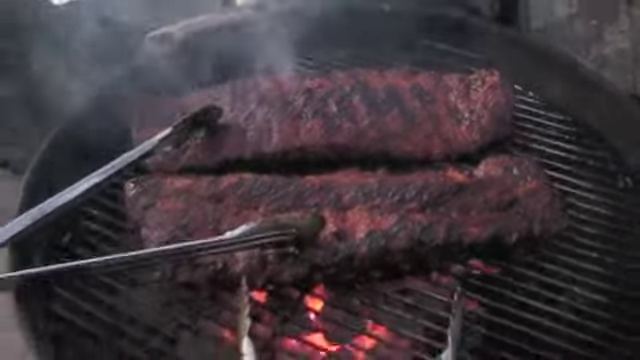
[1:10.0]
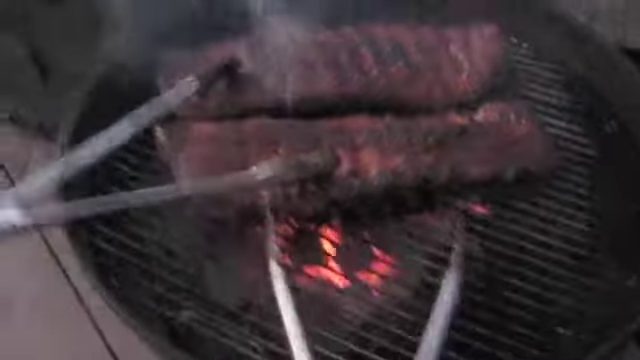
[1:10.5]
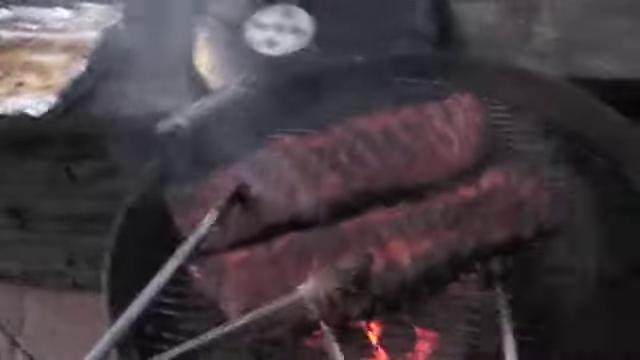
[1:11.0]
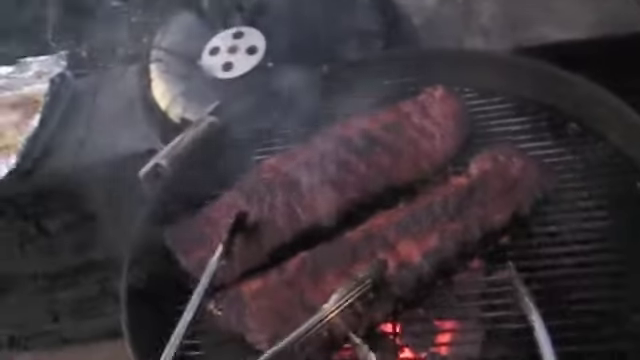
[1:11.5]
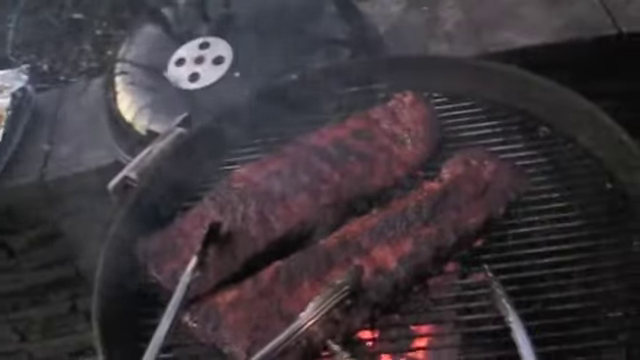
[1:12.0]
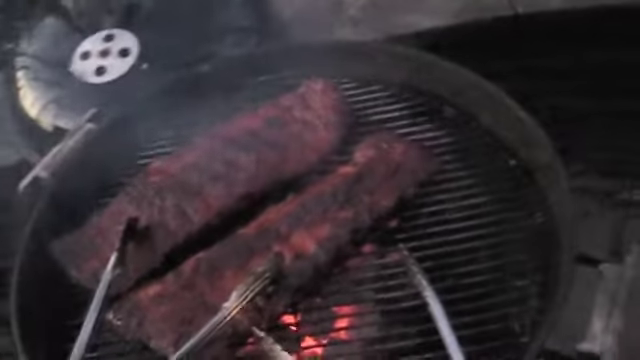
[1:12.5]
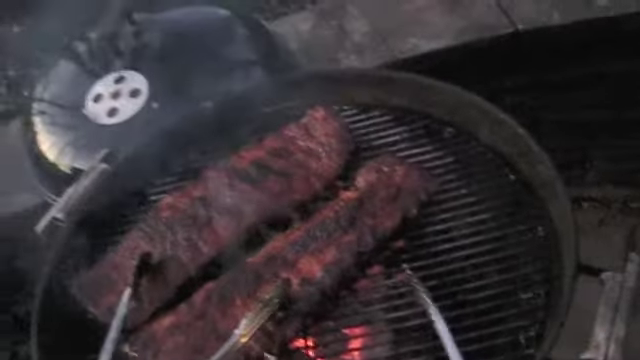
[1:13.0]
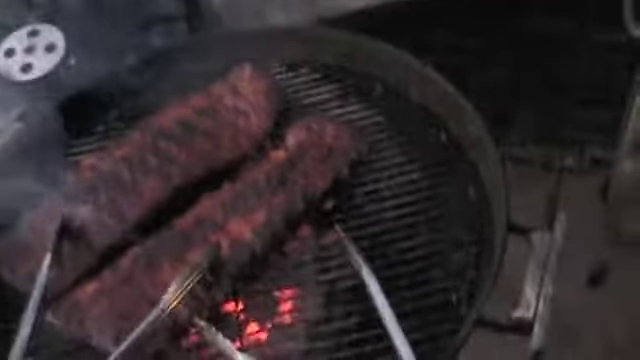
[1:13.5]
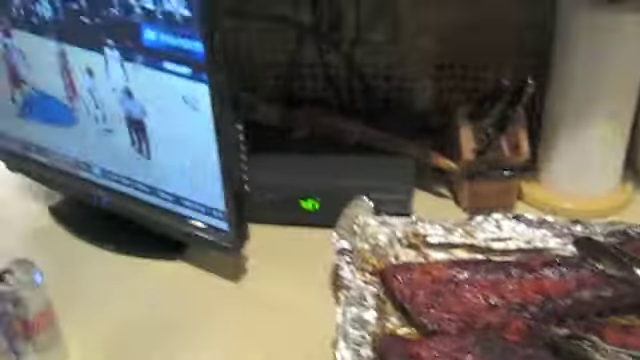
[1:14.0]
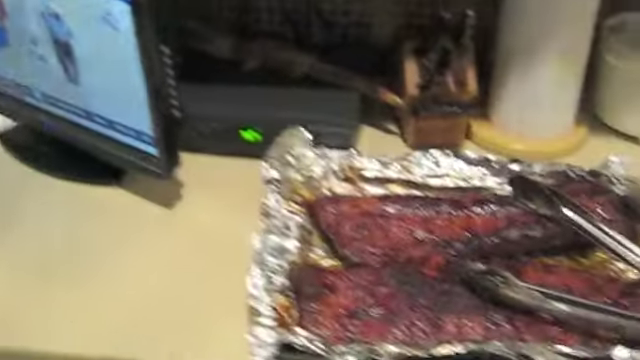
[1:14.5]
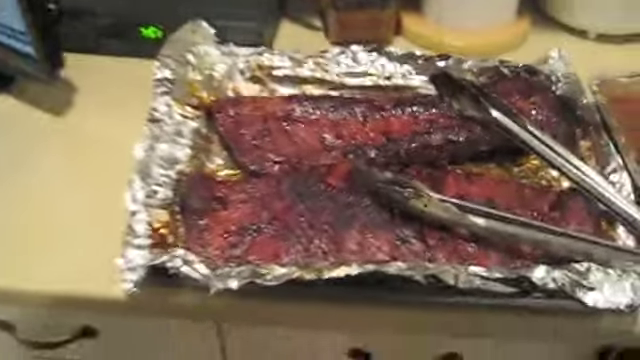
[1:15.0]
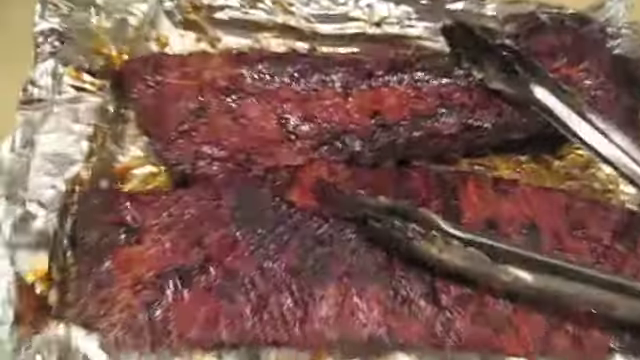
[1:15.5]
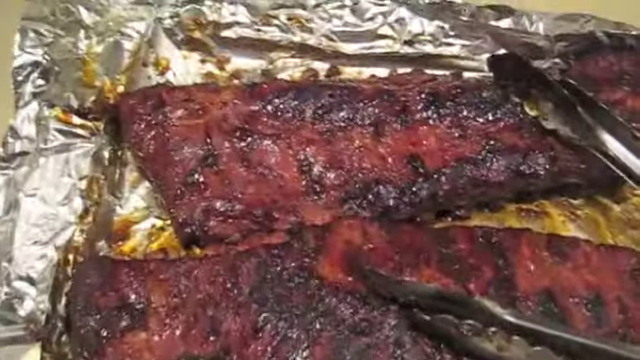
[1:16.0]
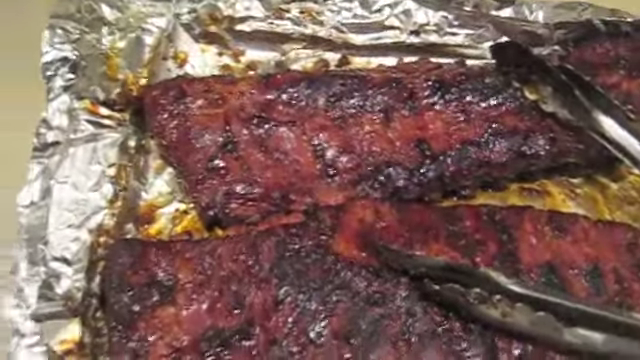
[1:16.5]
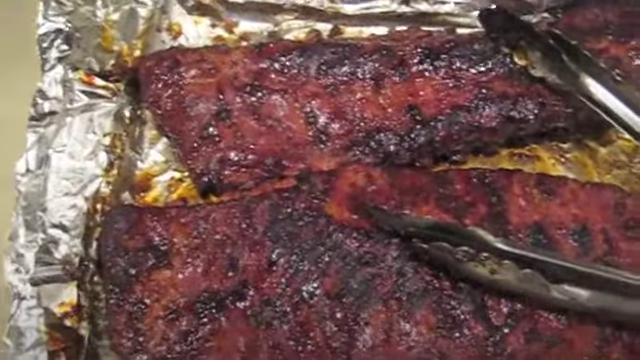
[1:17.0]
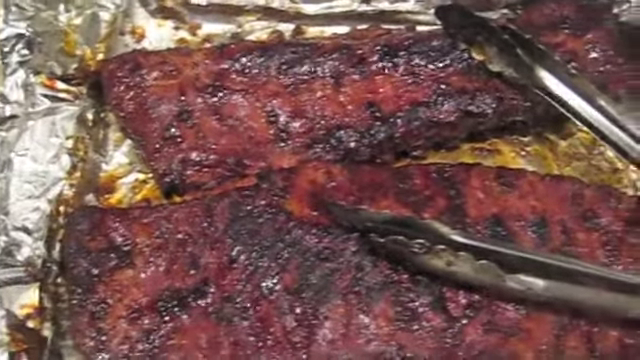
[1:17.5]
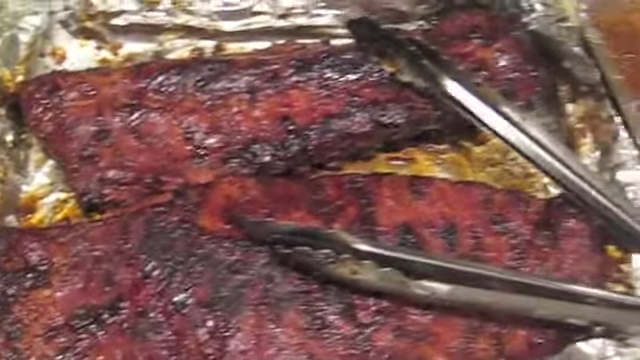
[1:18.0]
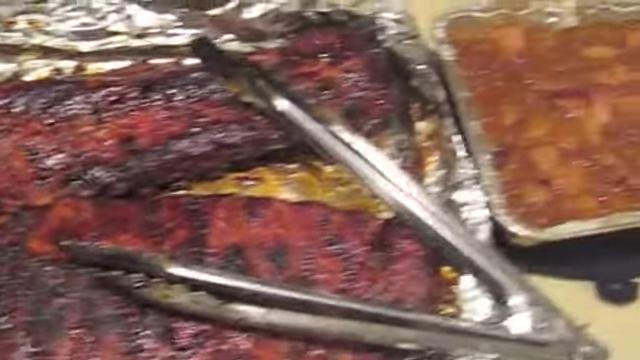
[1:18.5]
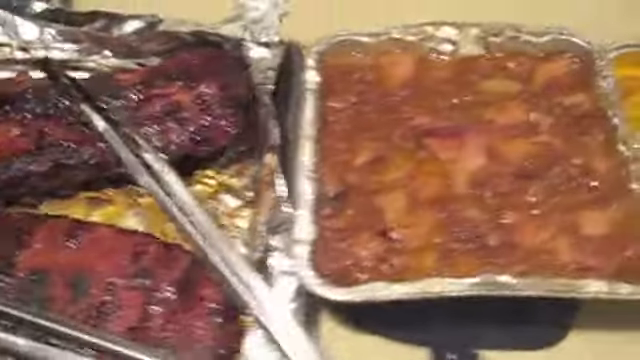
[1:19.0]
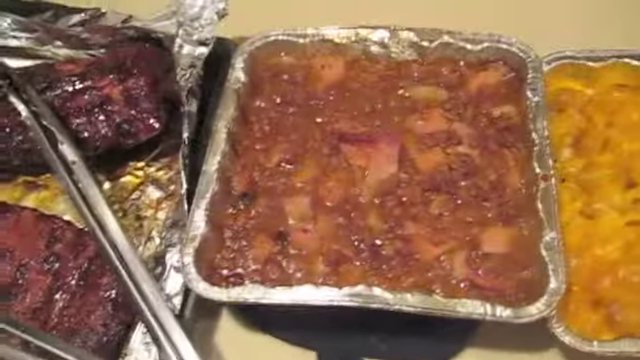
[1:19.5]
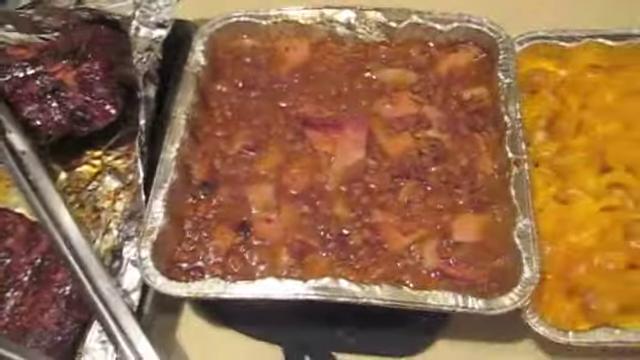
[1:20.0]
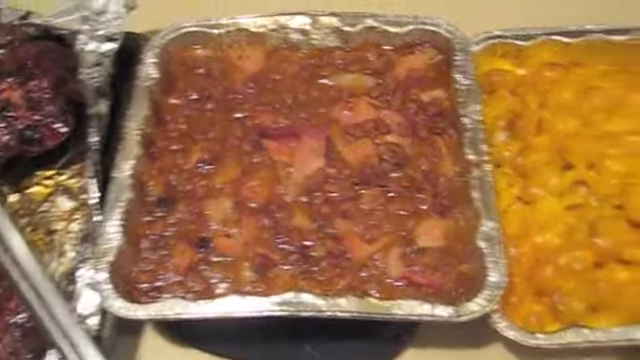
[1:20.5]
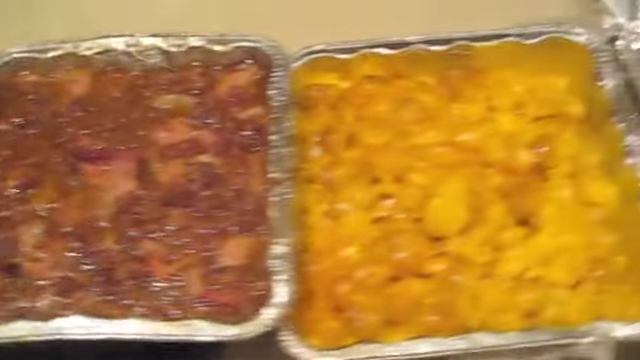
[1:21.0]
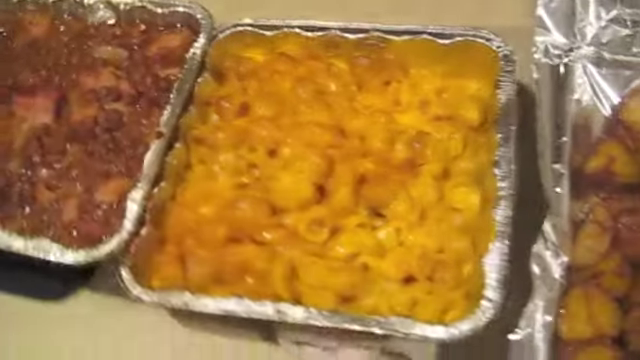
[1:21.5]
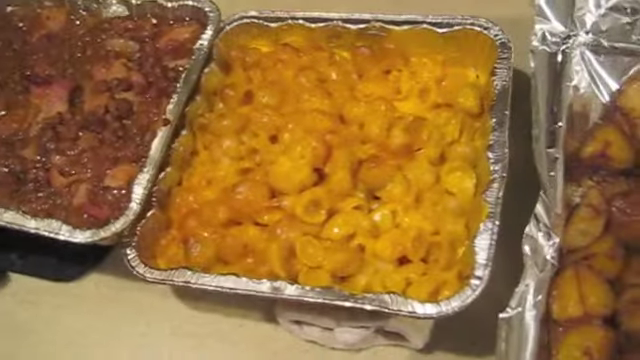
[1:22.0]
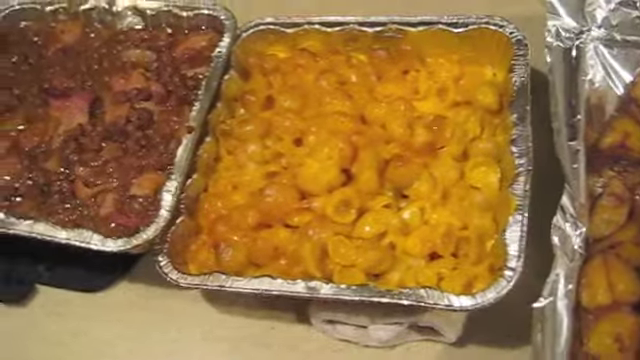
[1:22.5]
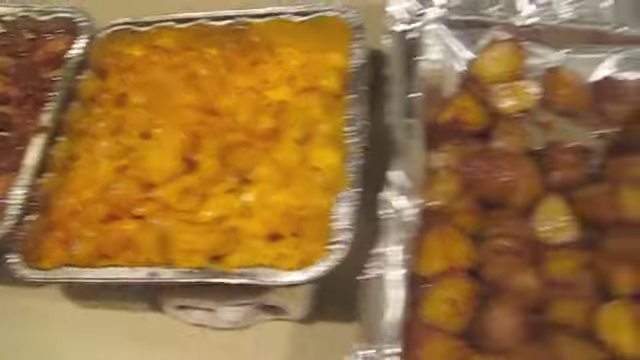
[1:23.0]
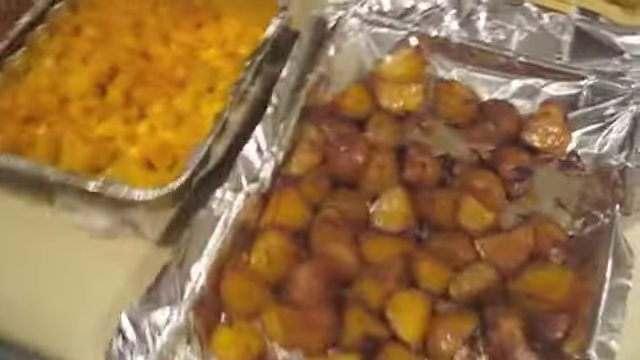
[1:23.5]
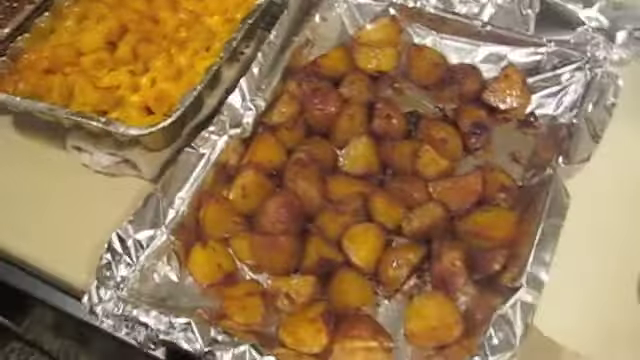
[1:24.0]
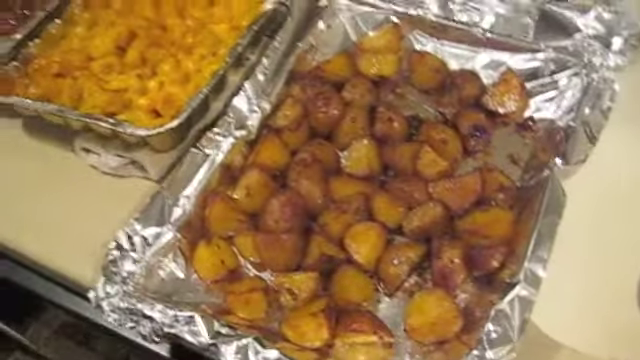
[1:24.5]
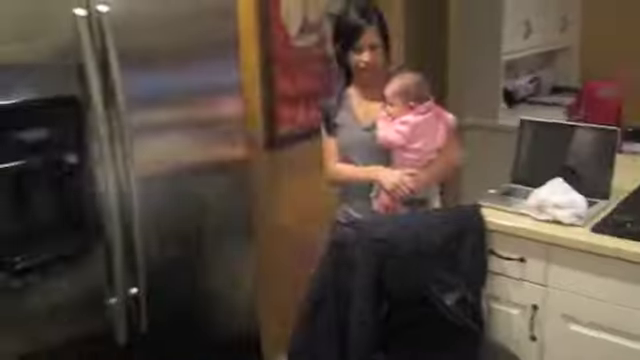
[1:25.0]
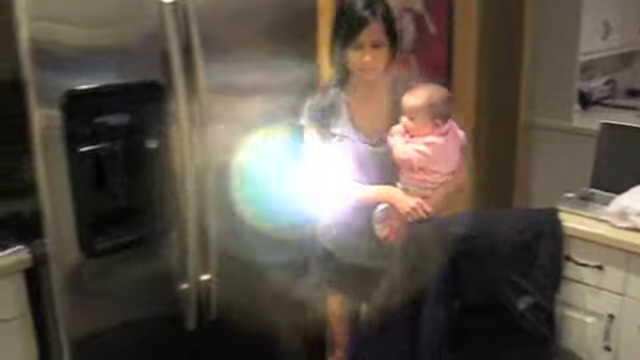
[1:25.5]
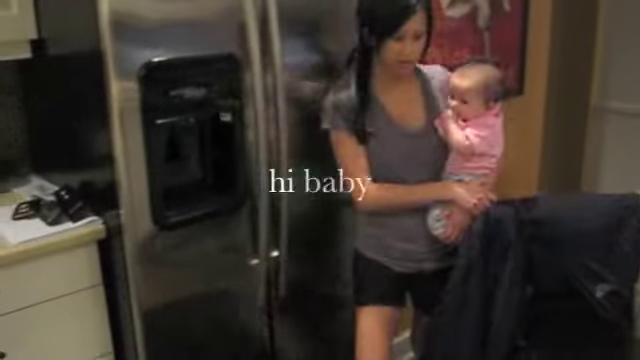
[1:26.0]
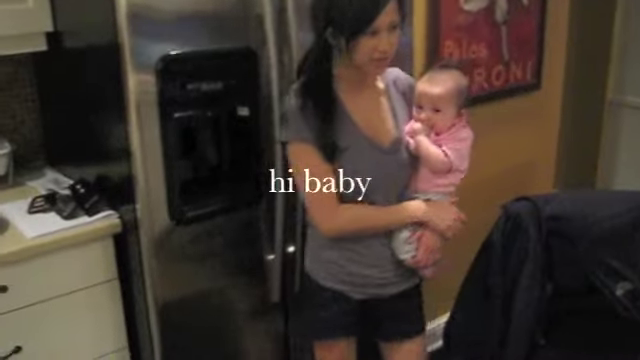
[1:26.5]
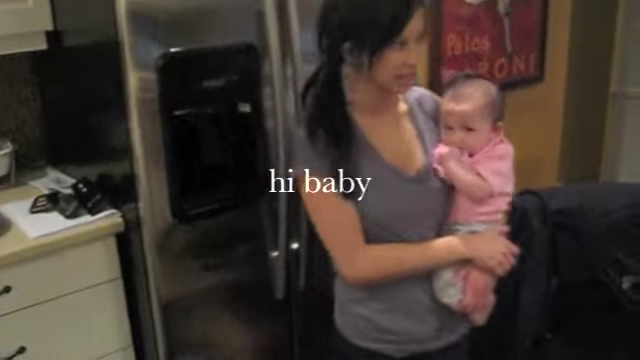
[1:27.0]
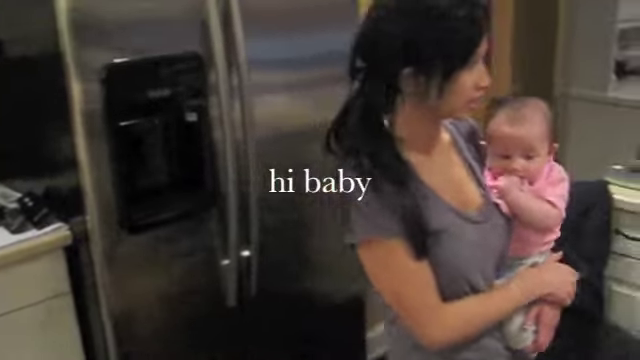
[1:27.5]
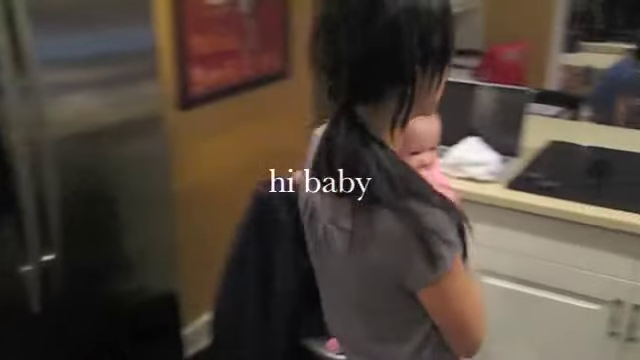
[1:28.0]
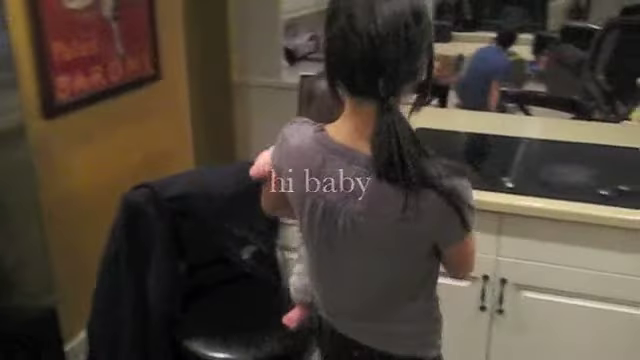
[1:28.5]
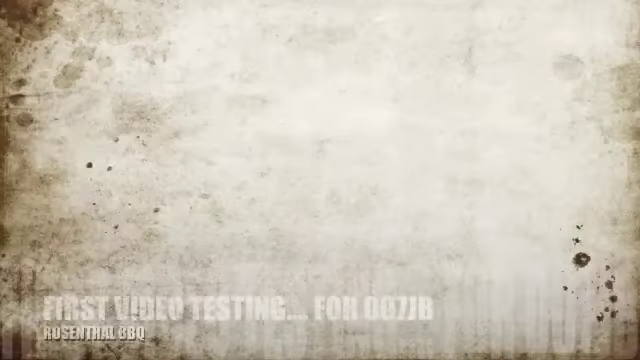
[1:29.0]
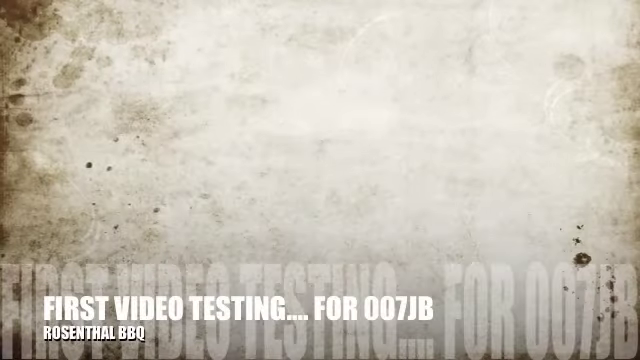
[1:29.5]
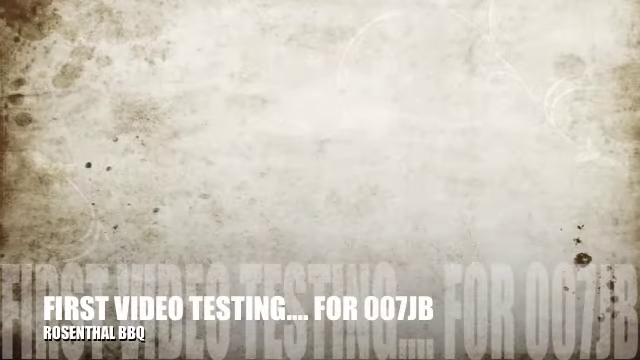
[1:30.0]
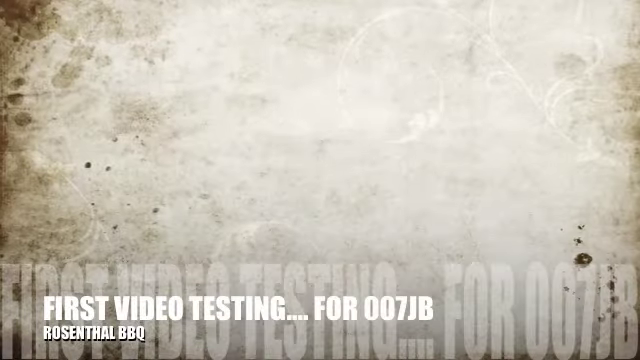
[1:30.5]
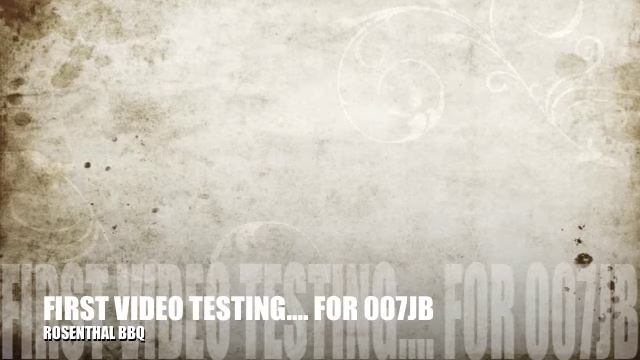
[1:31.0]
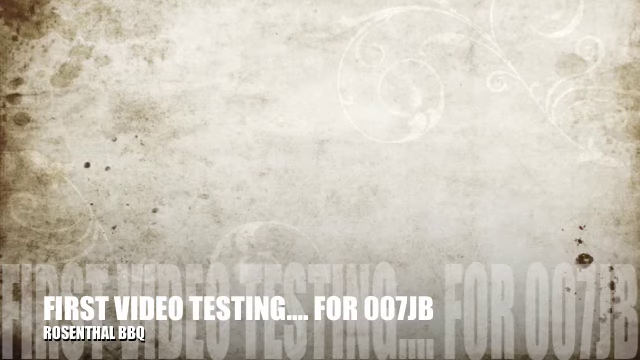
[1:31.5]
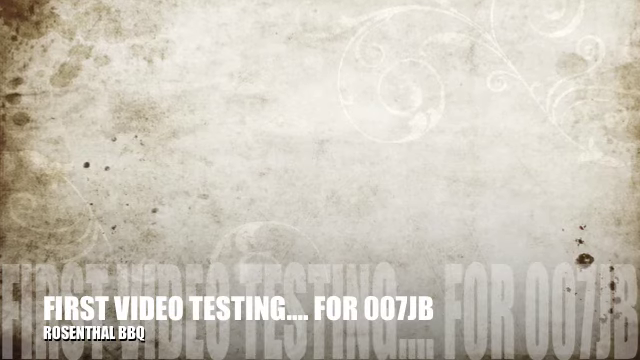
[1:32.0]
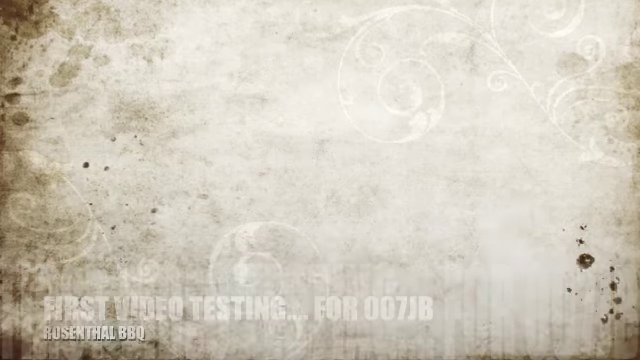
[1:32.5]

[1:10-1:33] The ribs are getting ready and then look ready. There are meals, including something that looks like macaroni. The scene moves indoors, apparently inside the house whose yard the cooking took place in. There is a laptop, and the food appears to now be indoors. A big fridge is in the kitchen. A woman wearing black shorts enters the kitchen holding a baby. They look ready to dish up. Text reads "hi baby."